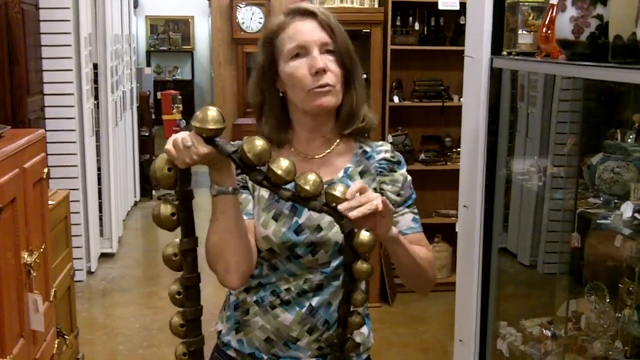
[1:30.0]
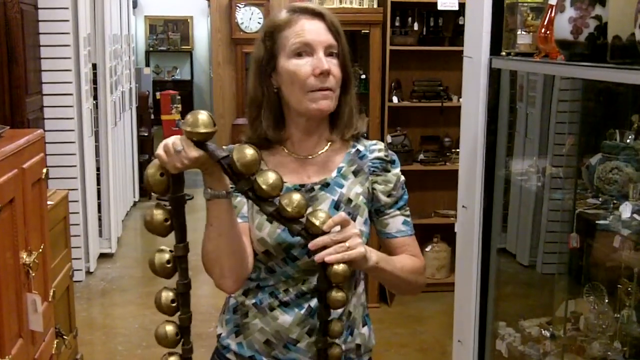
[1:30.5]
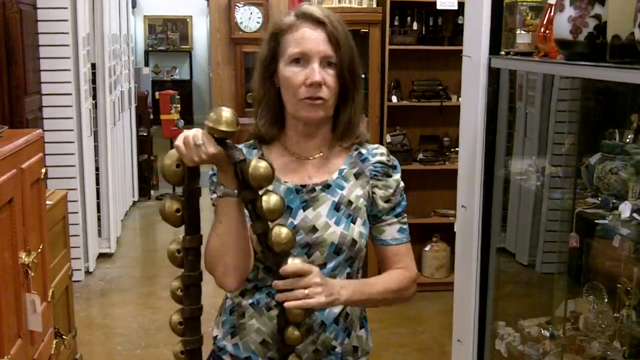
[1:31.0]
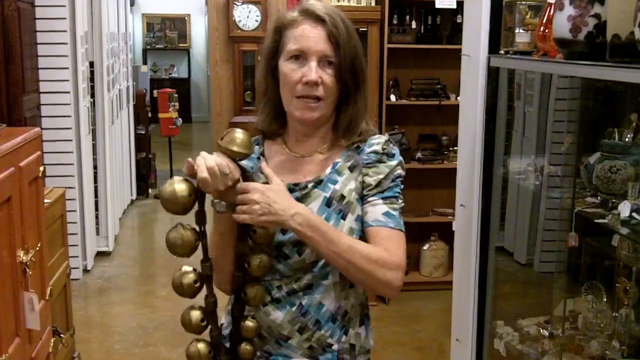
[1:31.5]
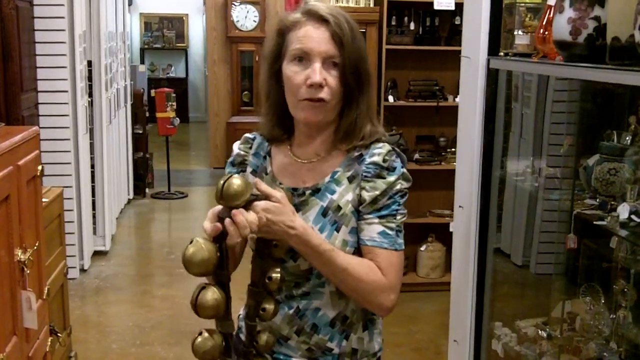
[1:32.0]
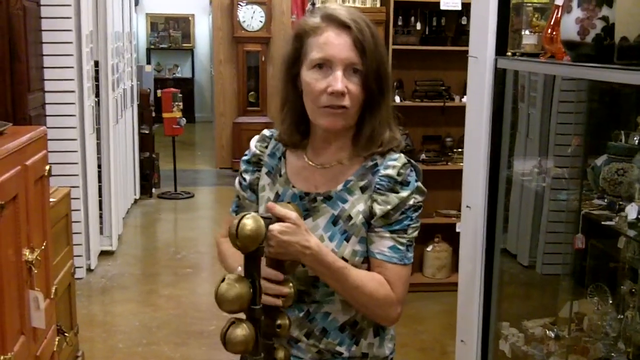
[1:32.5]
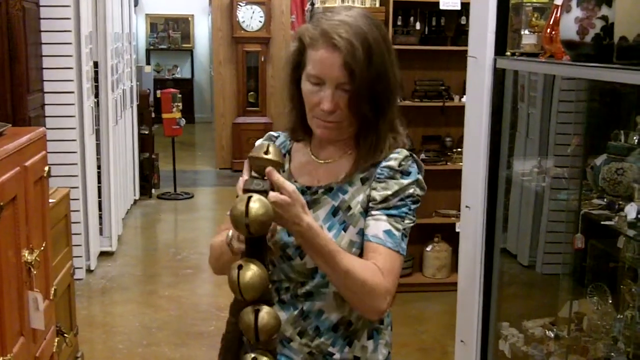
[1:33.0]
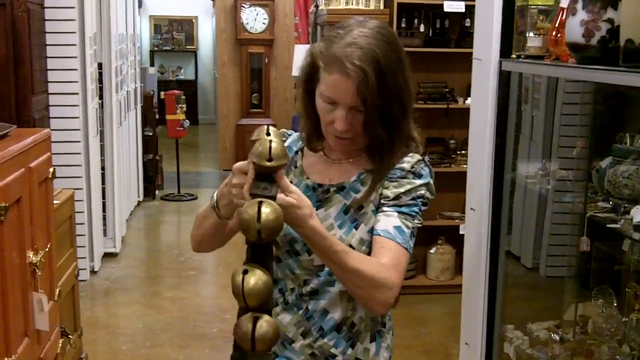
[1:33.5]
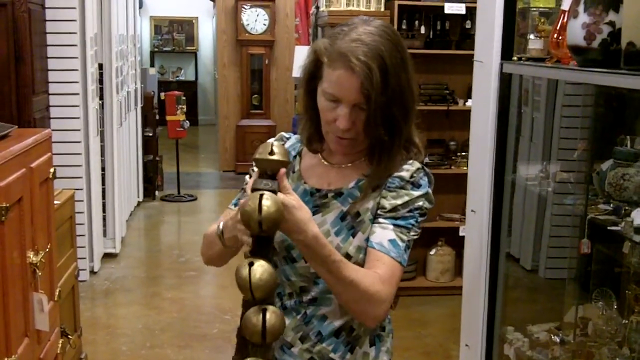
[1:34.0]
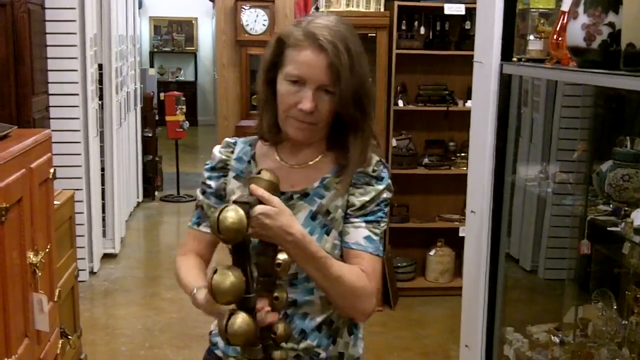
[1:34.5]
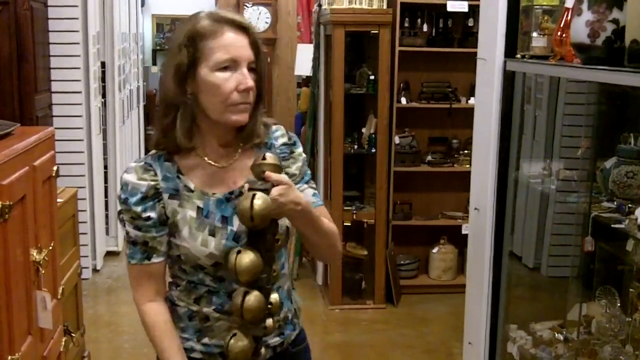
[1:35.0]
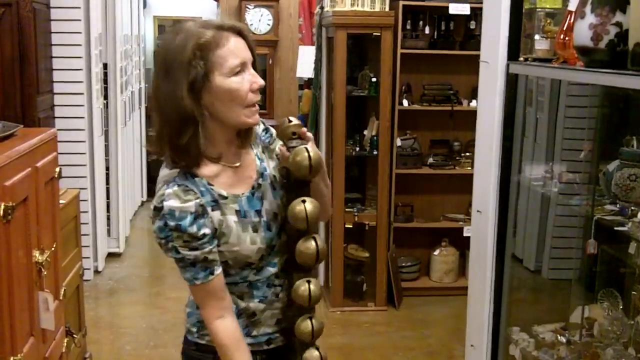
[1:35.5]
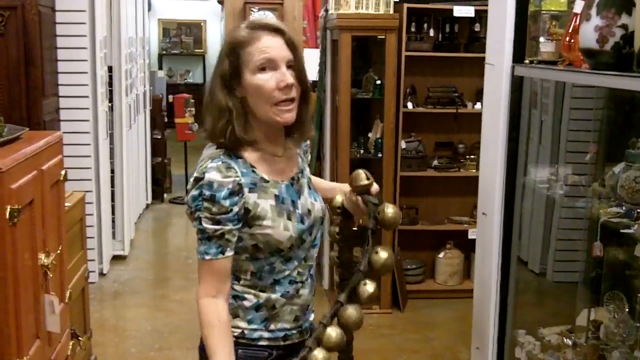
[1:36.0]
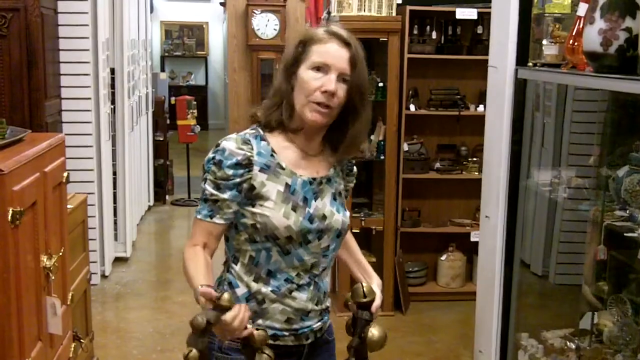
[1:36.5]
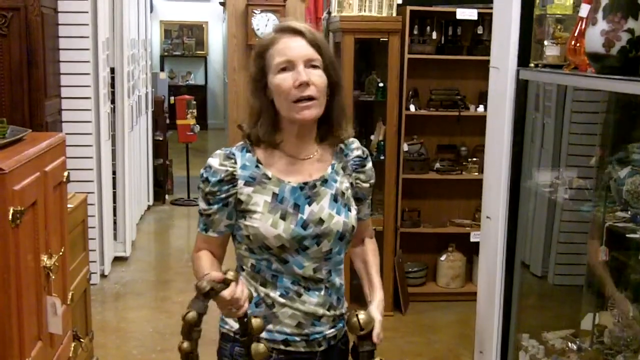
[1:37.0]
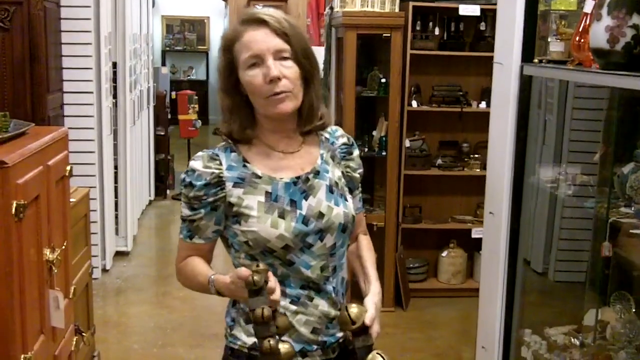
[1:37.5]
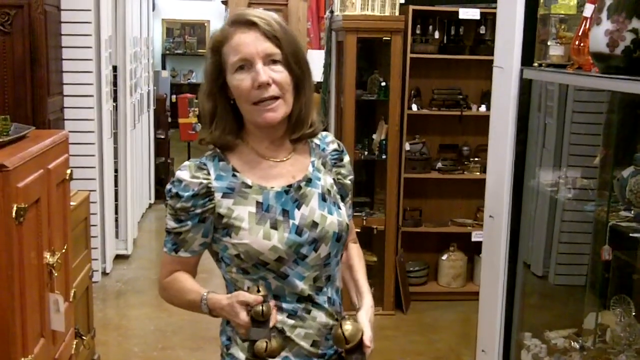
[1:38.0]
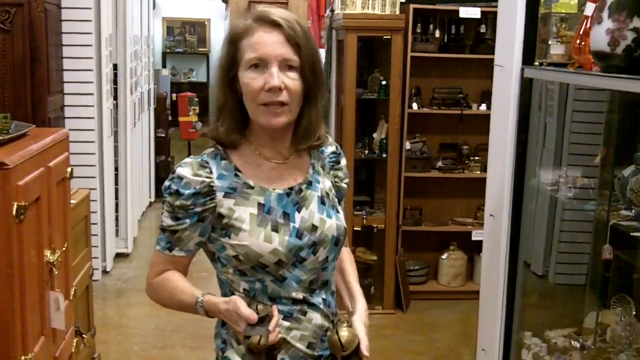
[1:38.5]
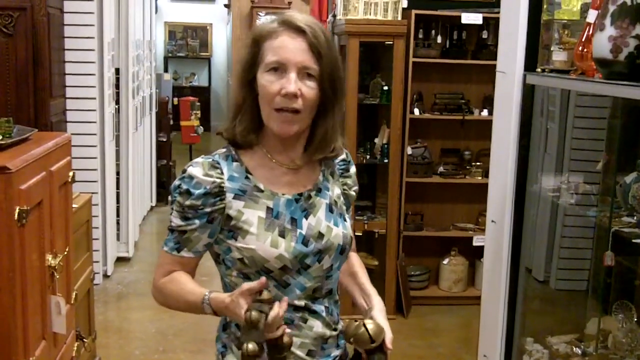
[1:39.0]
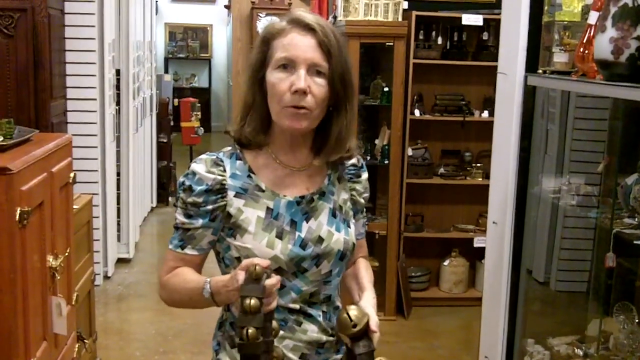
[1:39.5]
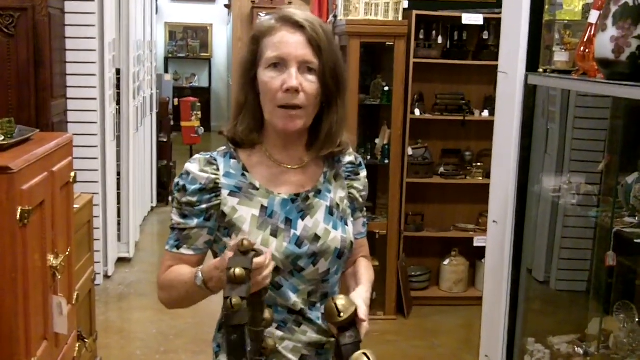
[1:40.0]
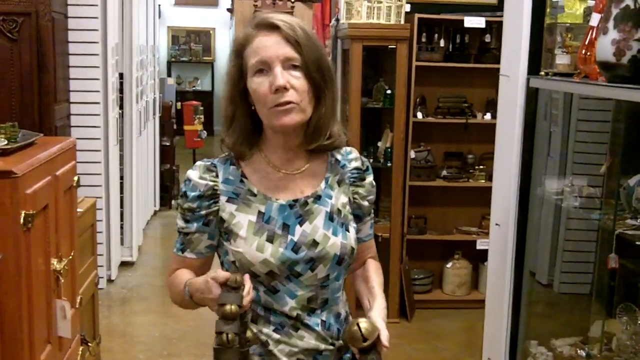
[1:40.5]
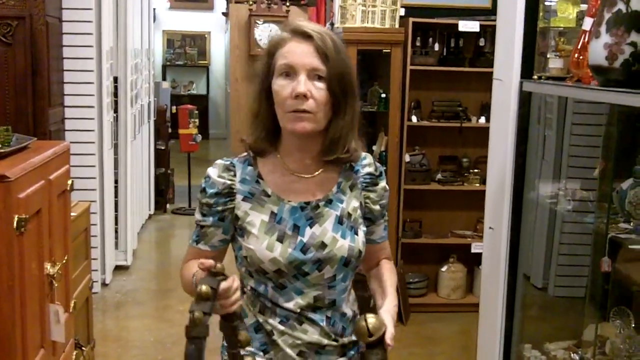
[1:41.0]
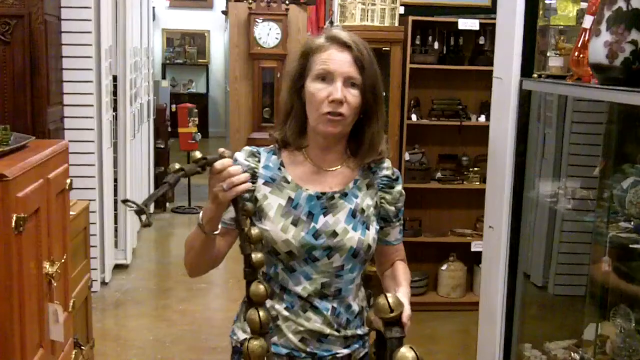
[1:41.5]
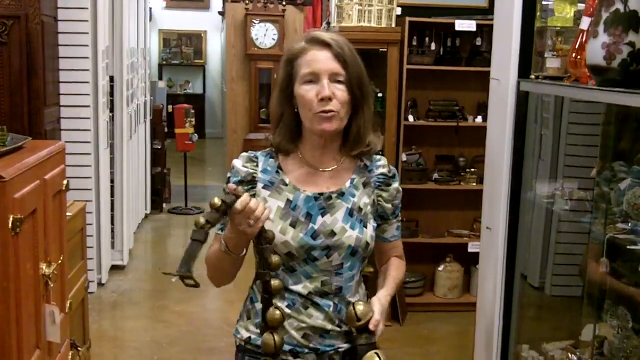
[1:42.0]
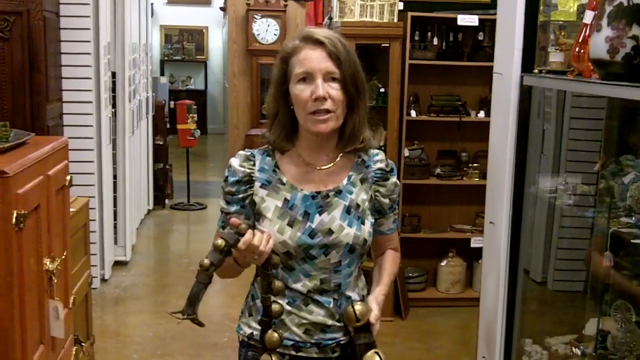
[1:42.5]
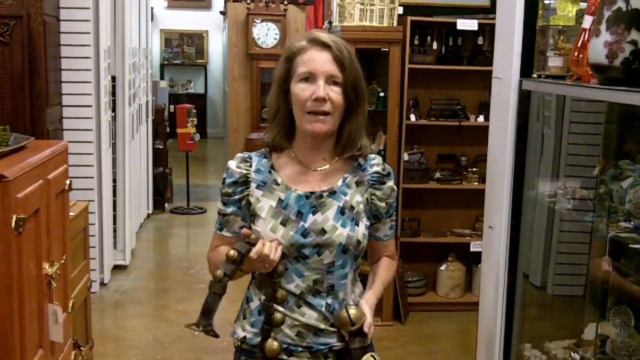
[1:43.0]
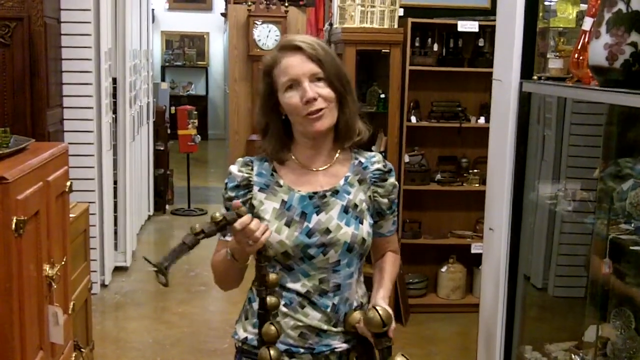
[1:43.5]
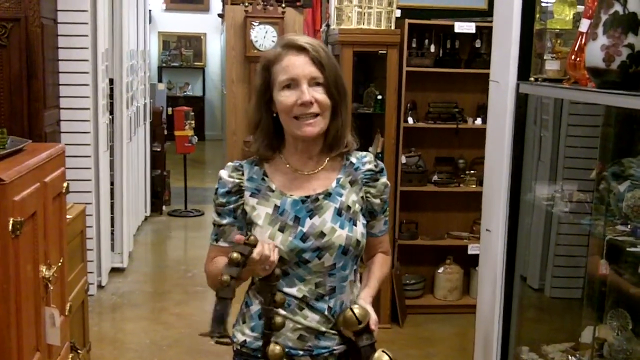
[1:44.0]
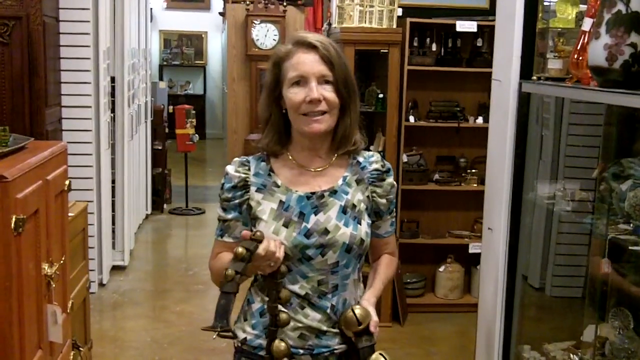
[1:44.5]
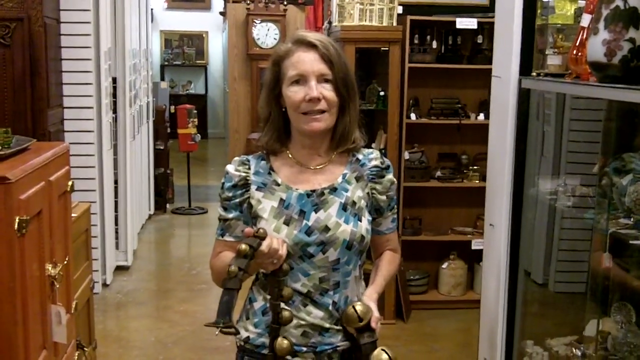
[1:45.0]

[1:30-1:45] A woman holds a leather belt with several bells on it. She shows the belt by holding the strap vertically, moving it left and right, and also showing it horizontally, keeping it very visible to the camera. She appears to be explaining the use or purpose of the object, possibly its history. The shop holds various things. A glass box at her side reflects her image, with a vase on top. Behind her are a long clock, a white wall with a painting hanging on it, and several shelves holding objects of different colors, such as gold, brown and dark brown. On her other side is a brown cabinet.